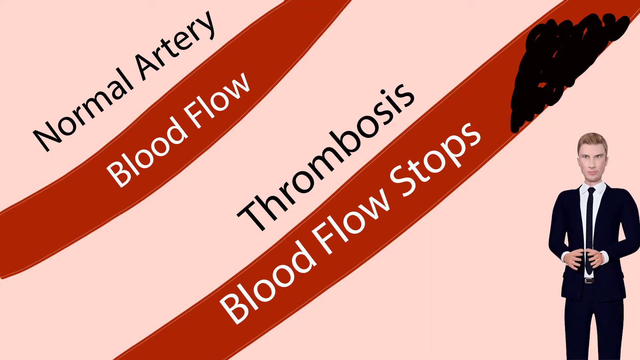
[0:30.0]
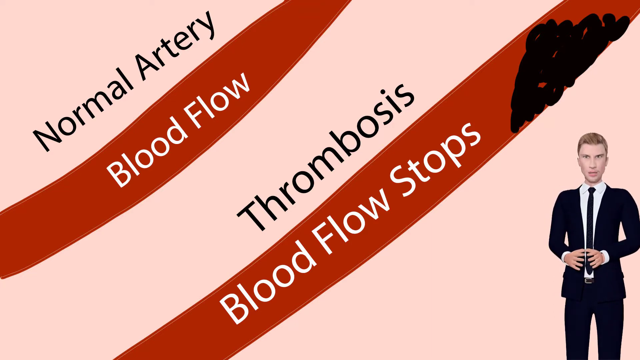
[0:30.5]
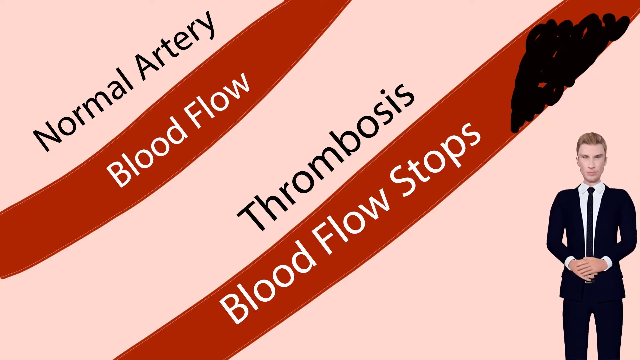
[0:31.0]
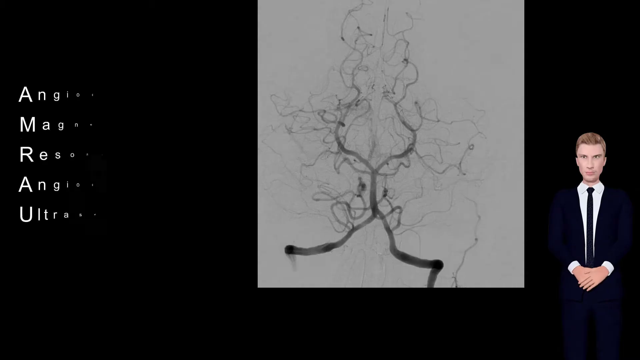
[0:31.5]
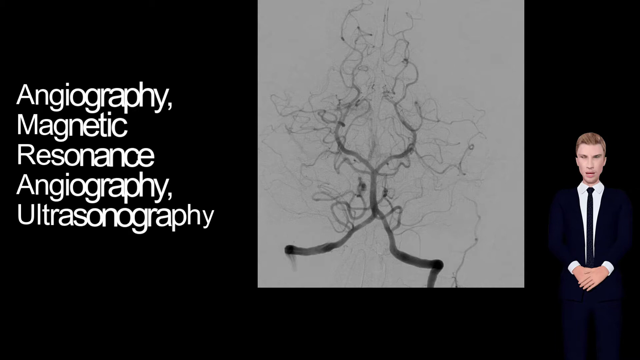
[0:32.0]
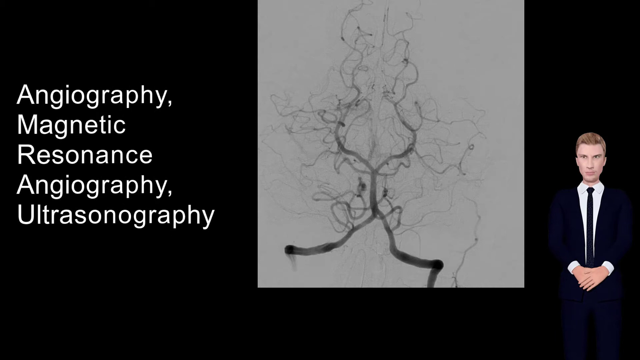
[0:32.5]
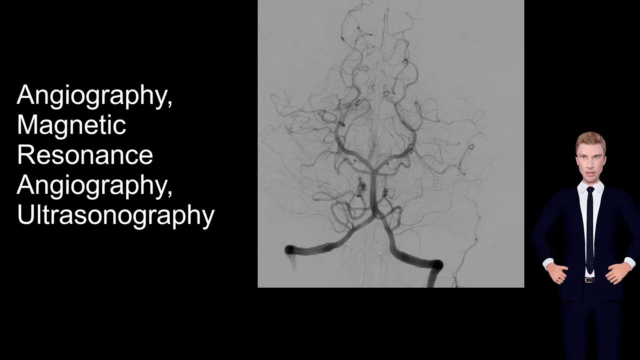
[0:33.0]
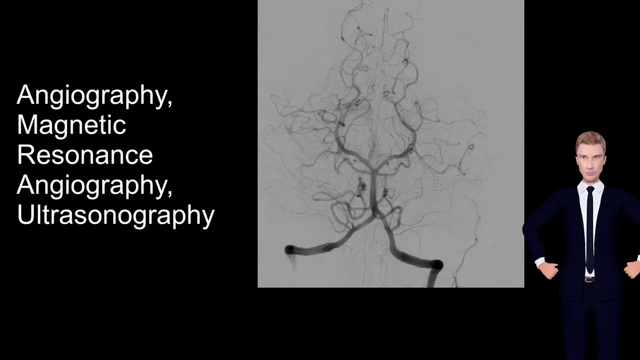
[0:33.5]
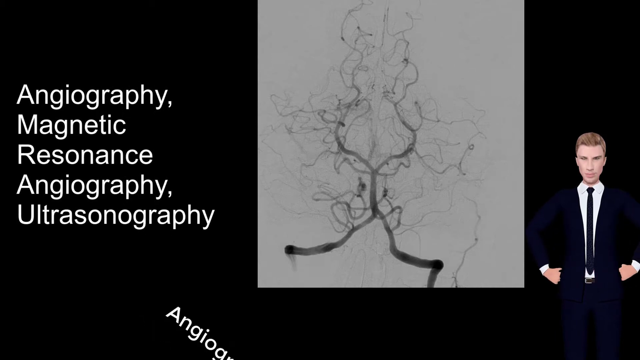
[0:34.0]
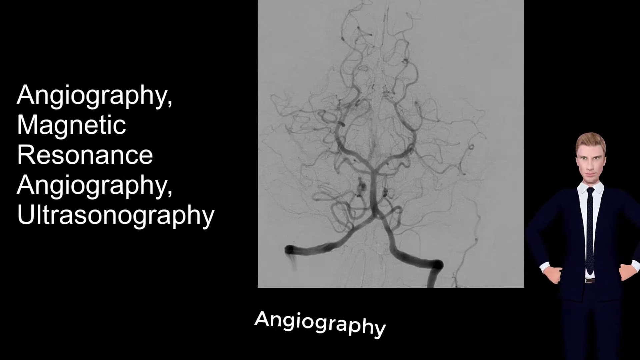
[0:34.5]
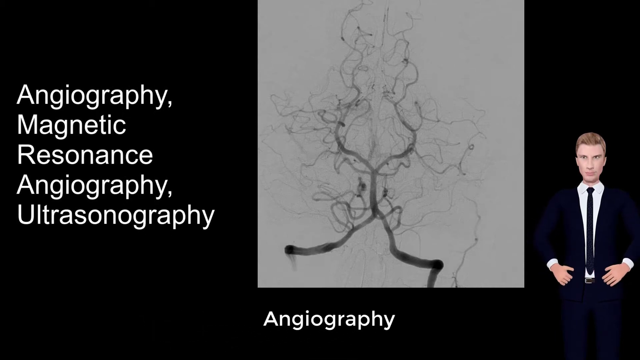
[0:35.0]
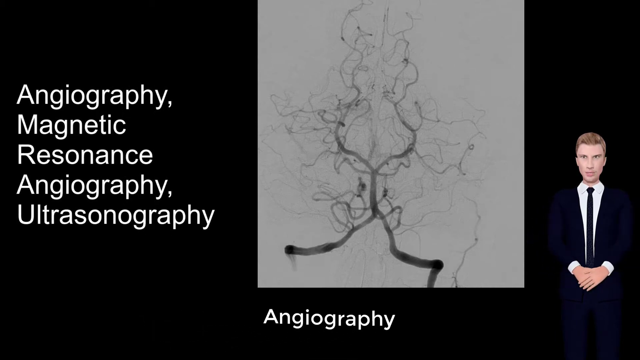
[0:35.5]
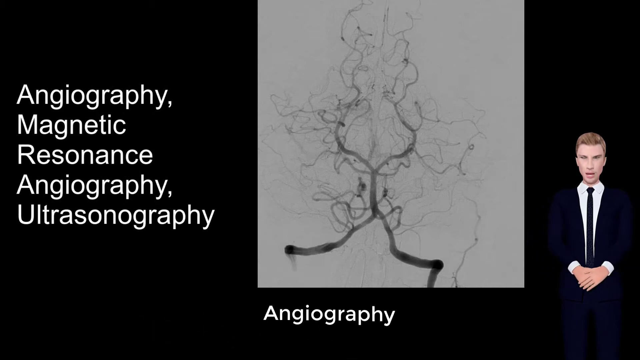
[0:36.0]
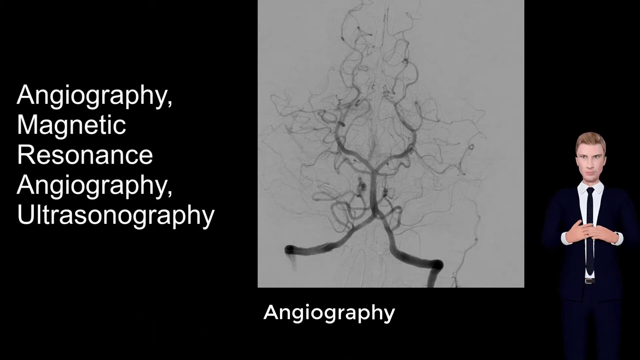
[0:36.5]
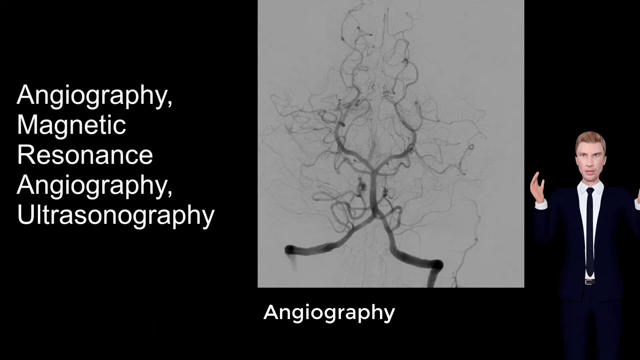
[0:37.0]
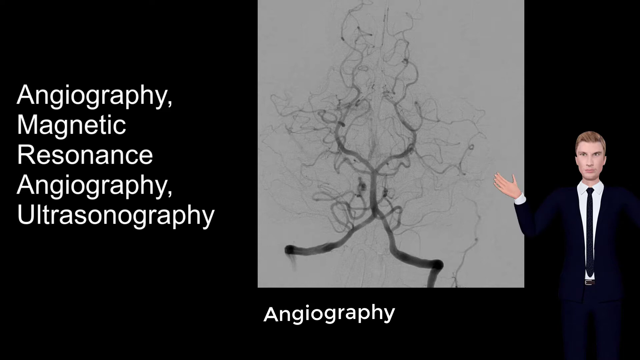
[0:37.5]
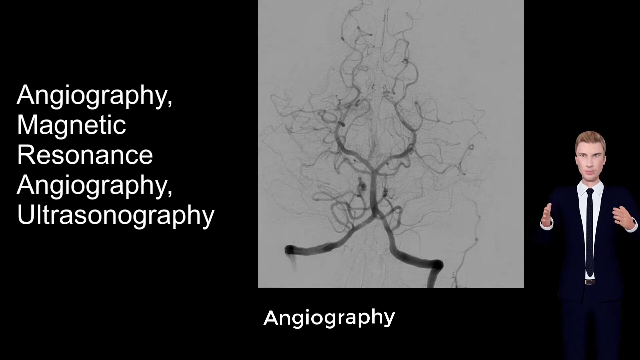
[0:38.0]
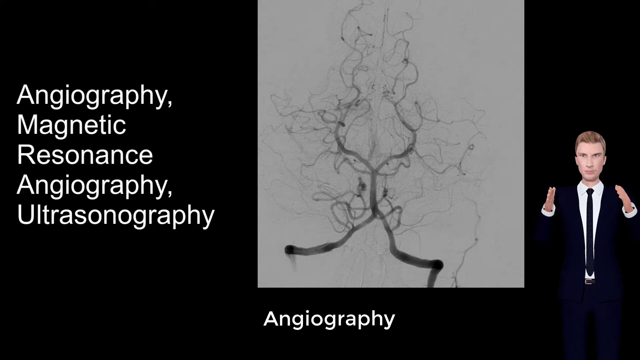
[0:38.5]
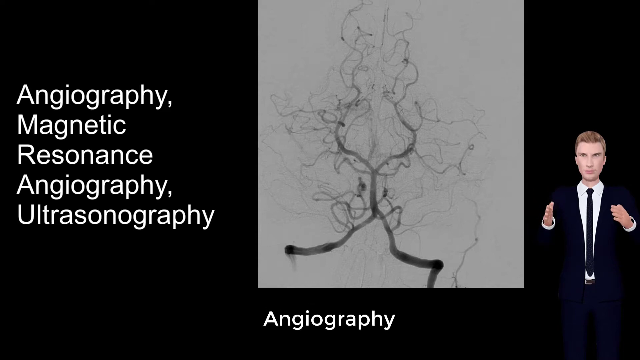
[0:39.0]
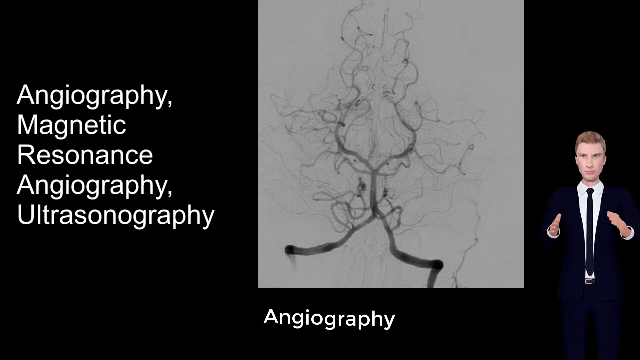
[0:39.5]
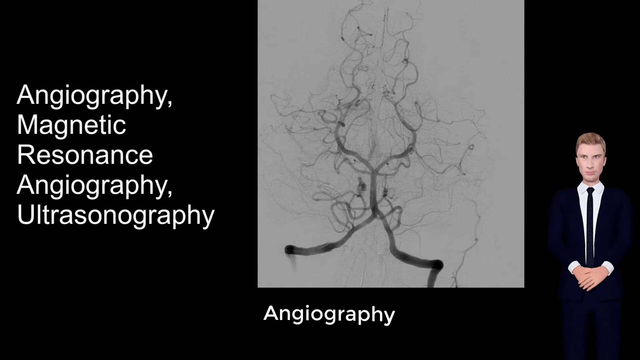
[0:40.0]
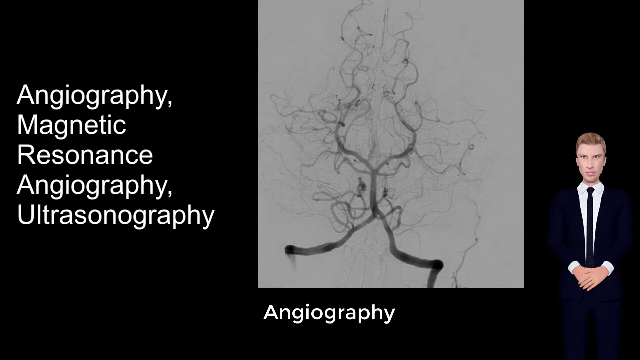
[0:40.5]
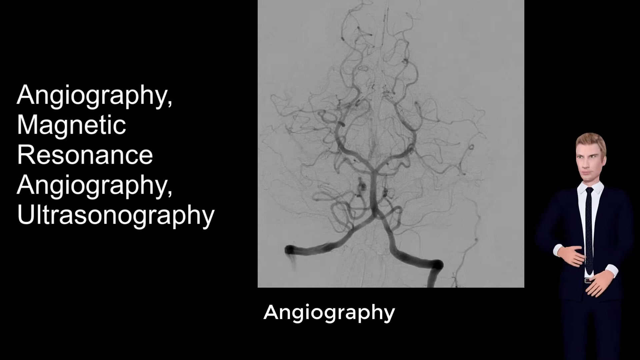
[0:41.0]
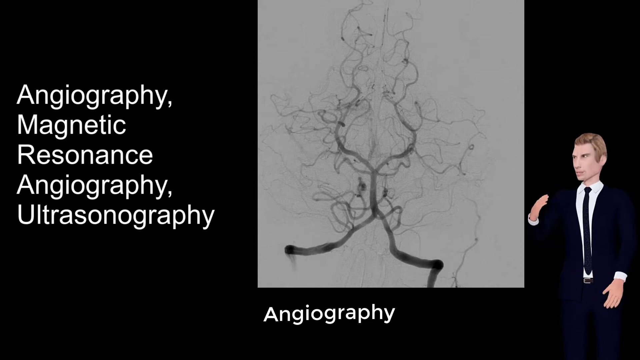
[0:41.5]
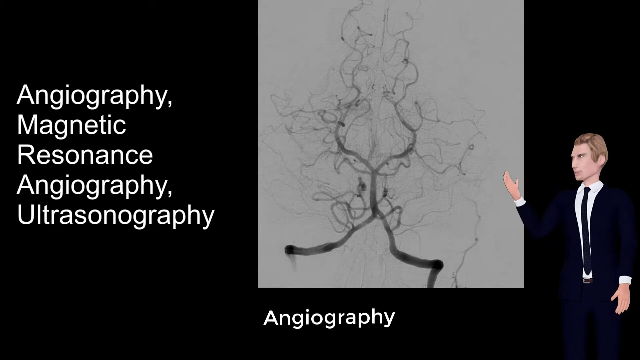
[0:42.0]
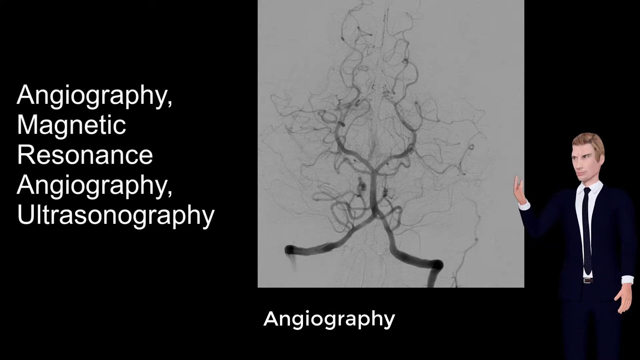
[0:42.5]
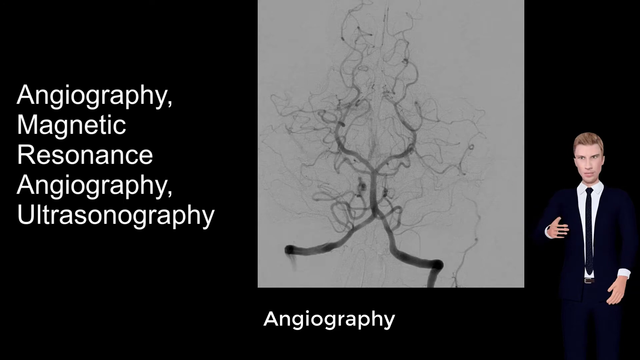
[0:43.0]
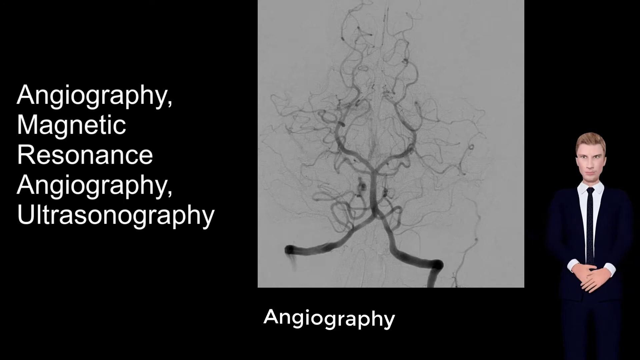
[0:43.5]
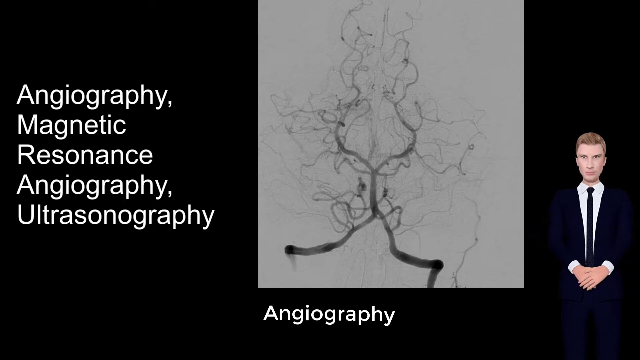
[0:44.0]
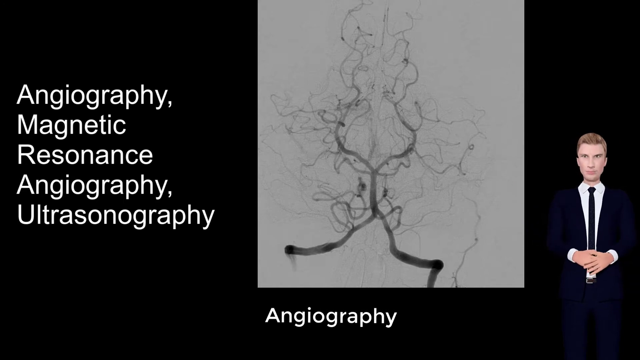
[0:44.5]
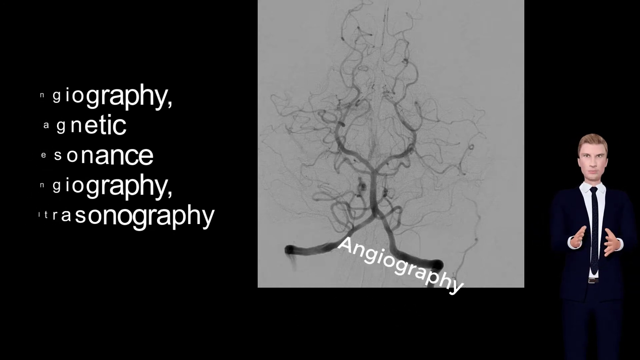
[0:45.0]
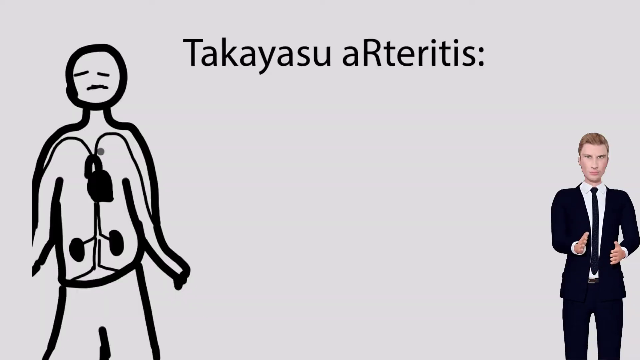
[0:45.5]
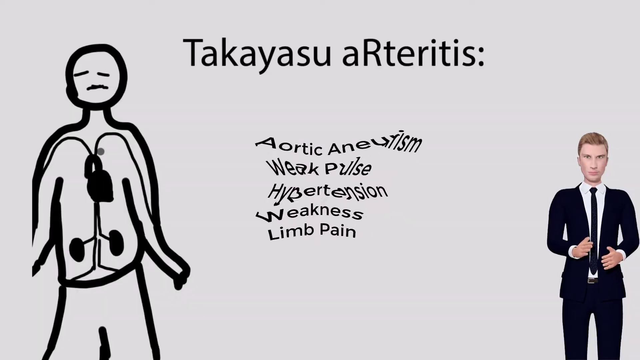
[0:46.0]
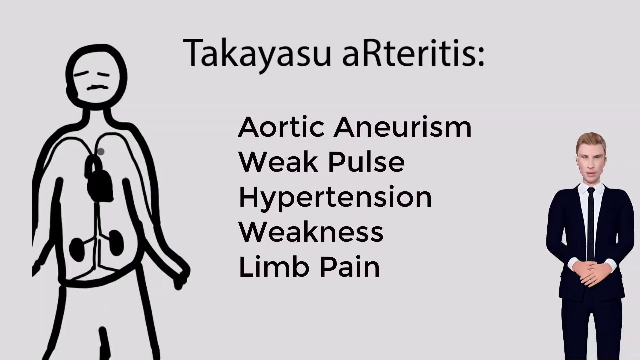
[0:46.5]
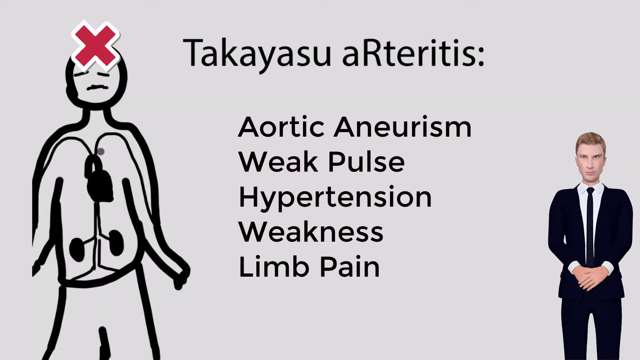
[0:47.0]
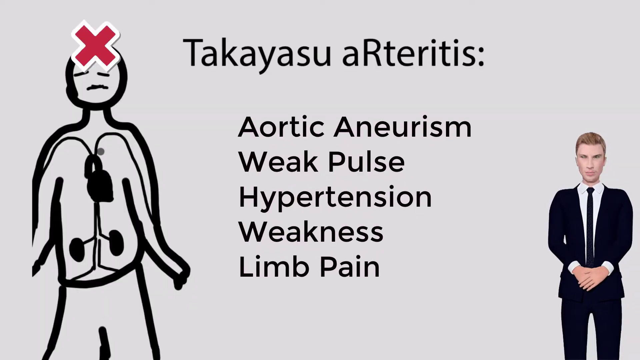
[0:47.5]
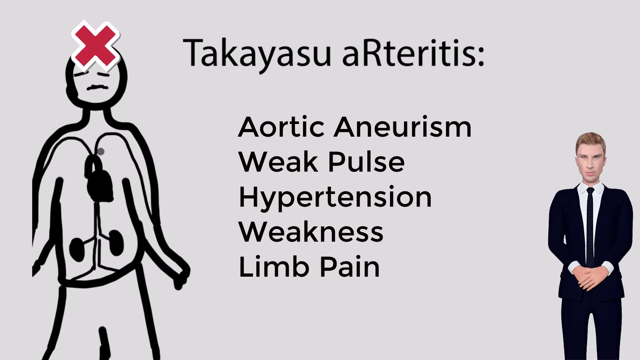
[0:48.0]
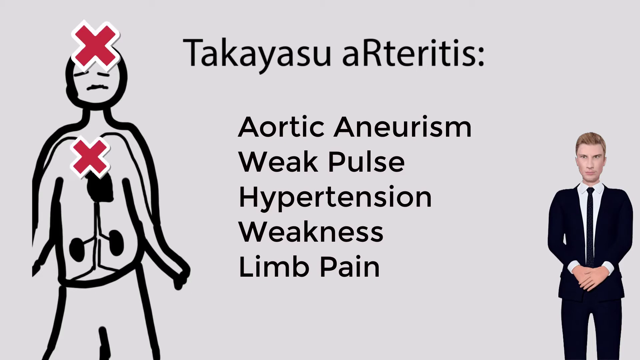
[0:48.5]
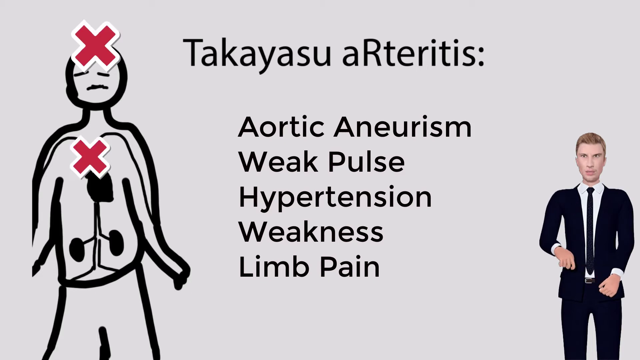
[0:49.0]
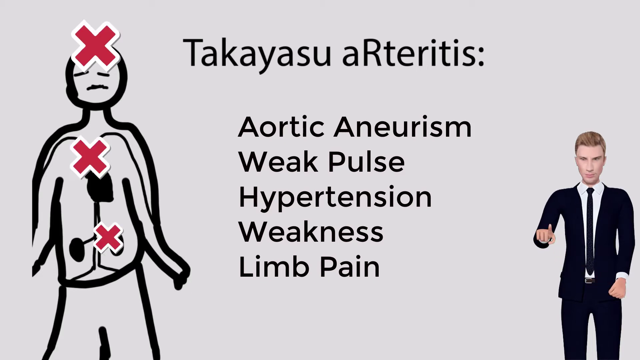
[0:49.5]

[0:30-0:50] Text reads "angiography, magnetic resonance angiography, and ultrasonography", and images show blood vessels and the circulation to the brain. Text reads "aortic aneurysm". A normal artery with regular blood flow is shown beside thrombosis, where the blood flow stops. Radiography images of blood flow areas show clogs in certain areas. Cartoons appear with text placed in various areas, showing blood clots in different places.